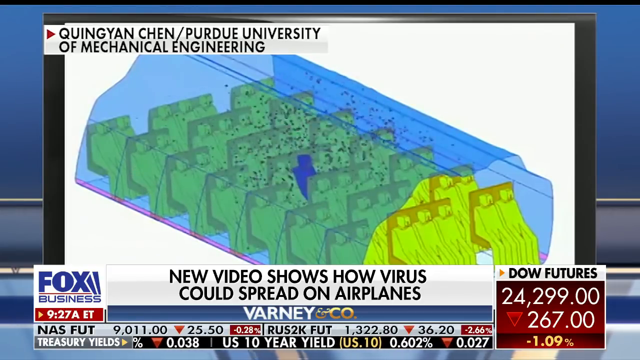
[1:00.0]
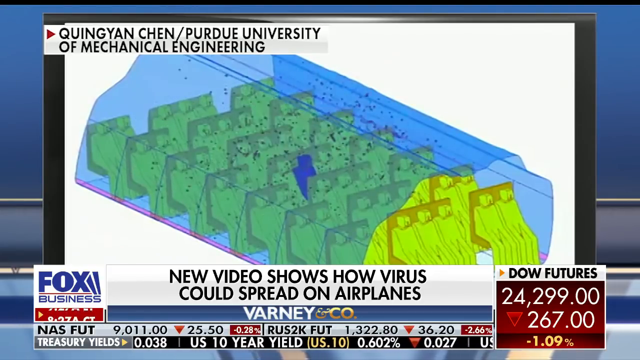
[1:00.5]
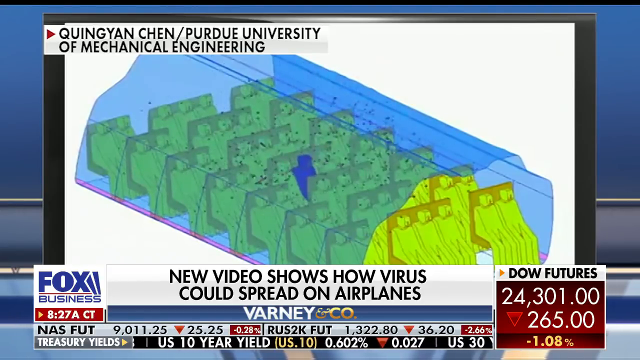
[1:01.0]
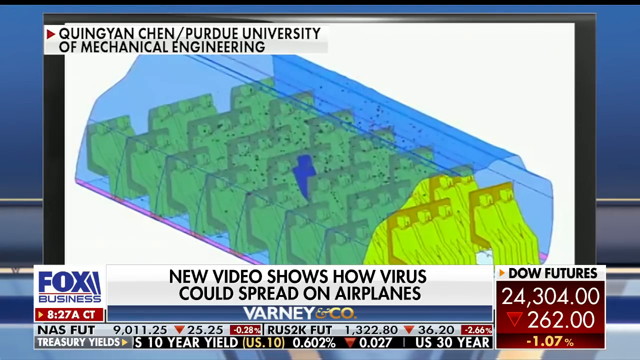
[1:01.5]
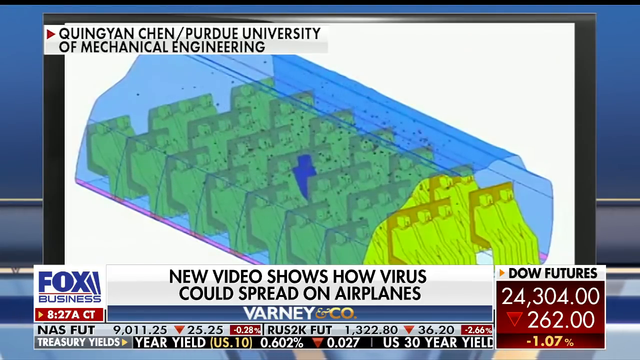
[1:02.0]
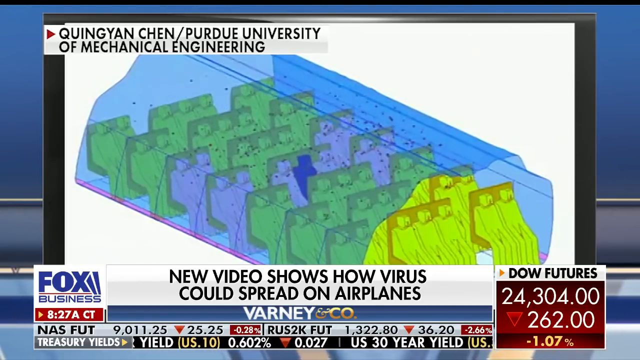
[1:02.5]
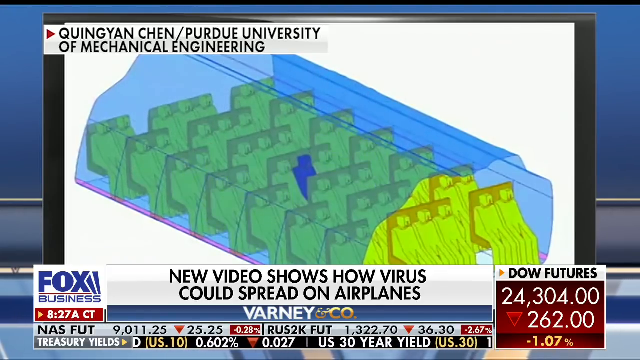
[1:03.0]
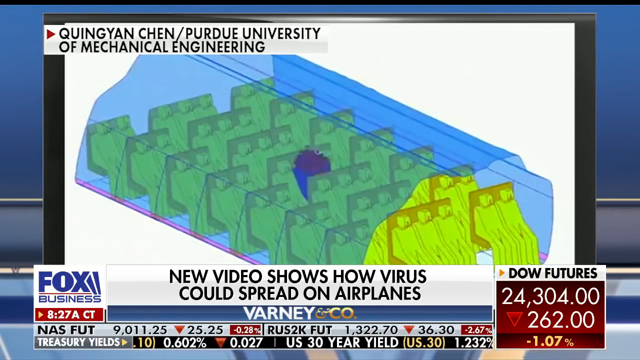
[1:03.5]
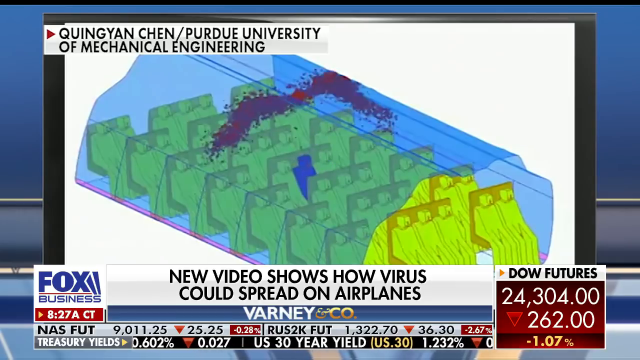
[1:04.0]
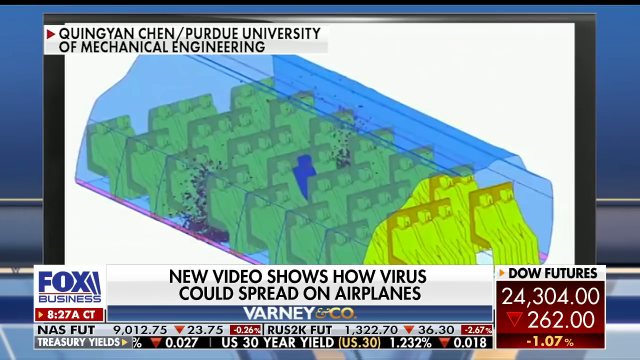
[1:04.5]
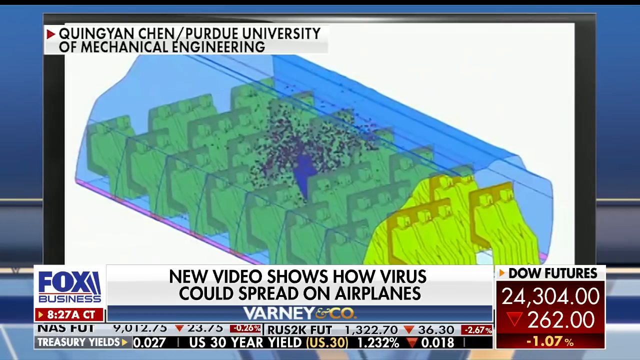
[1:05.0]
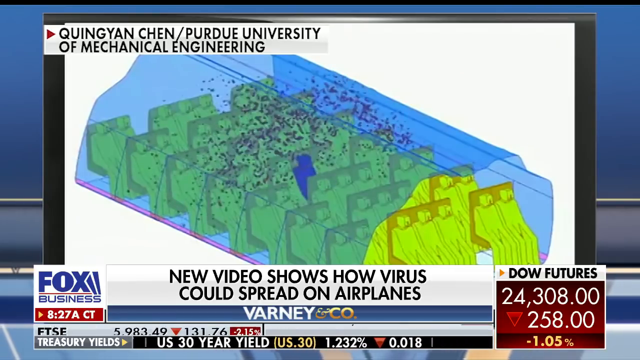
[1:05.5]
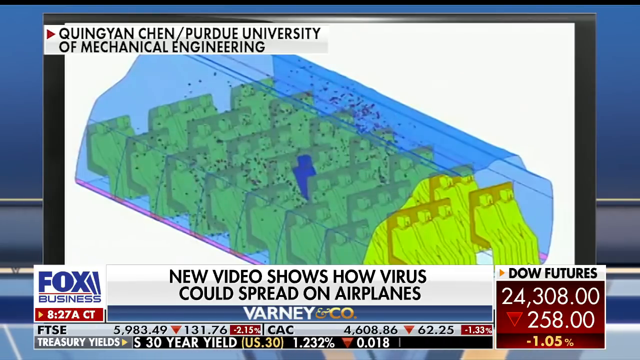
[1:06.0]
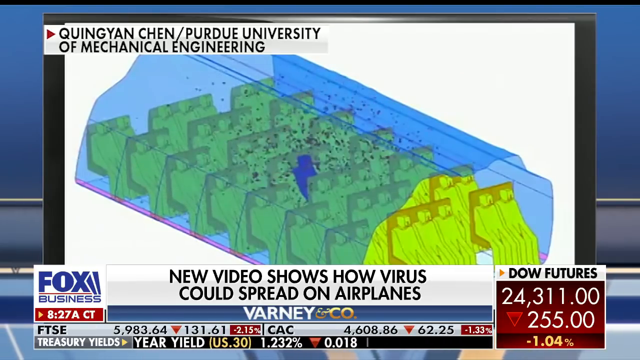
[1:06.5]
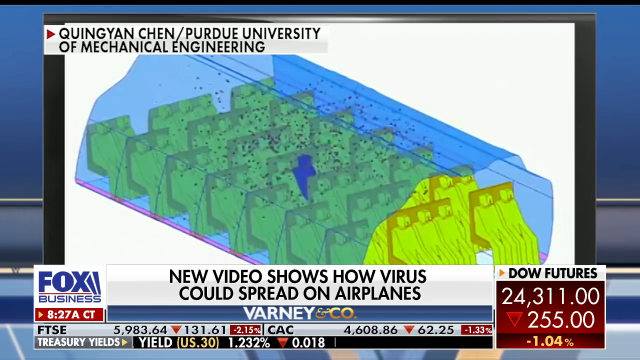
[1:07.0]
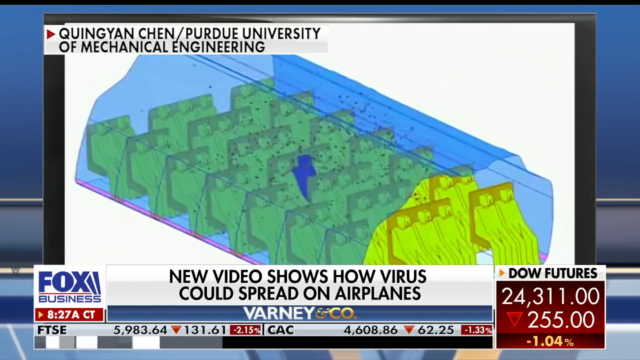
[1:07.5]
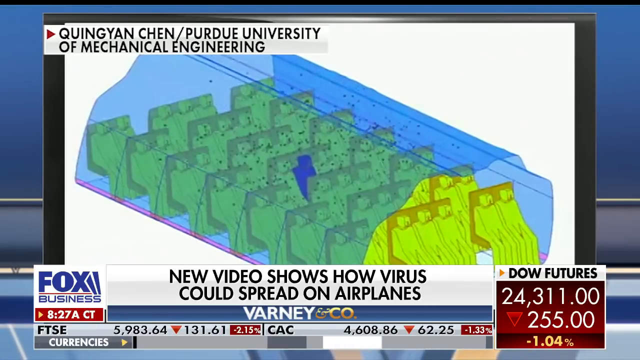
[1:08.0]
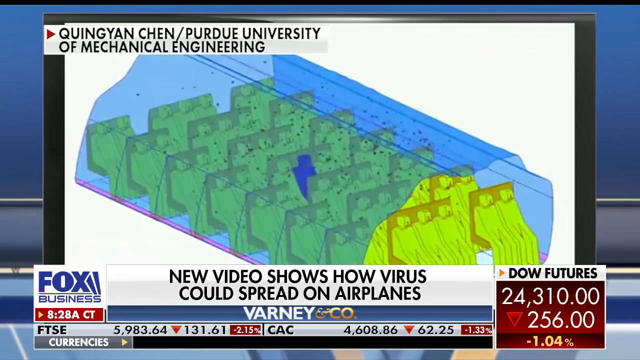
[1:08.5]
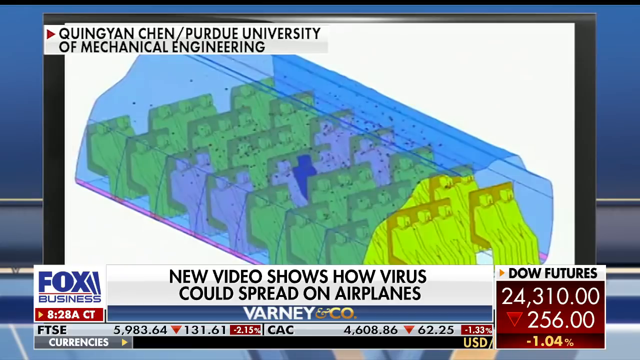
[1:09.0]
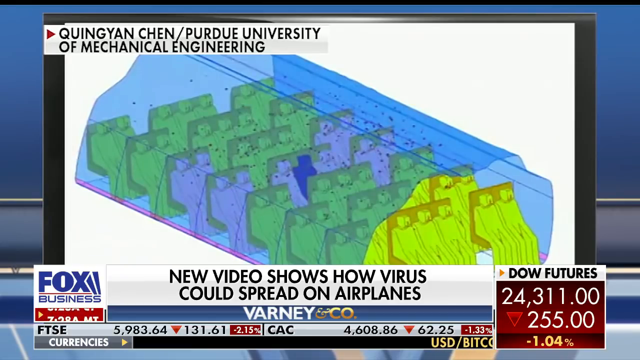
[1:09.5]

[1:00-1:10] The same animation plays and loops once. It shows the passenger cabin of an airplane with seven rows of seats and three sections per row. The infected person, colored blue, is in the middle of the fourth row. As they sneeze or cough, two batches of viruses spring out of them and land on the left and on the right. The viruses then break up and scatter all over the cabin, but they are mostly concentrated in the middle of the cabin, so the passengers in the middle are shown at higher risk of infection than the ones in the back. A blue film over the cabin appears to show the radius or range of infection. The passengers in the first row are kind of safe, away from the range.